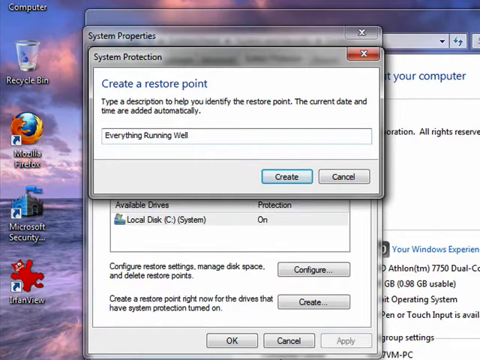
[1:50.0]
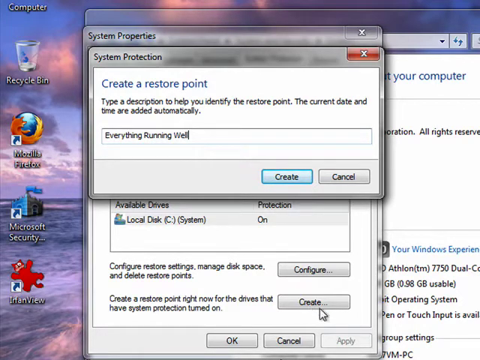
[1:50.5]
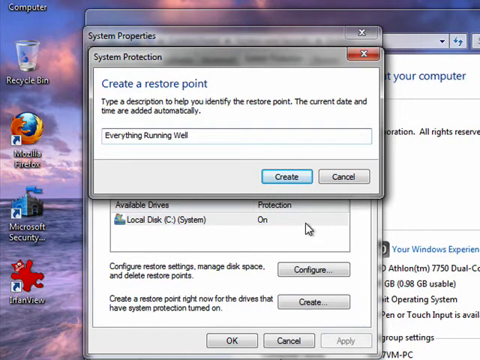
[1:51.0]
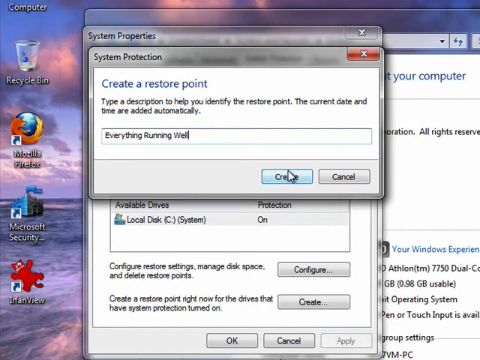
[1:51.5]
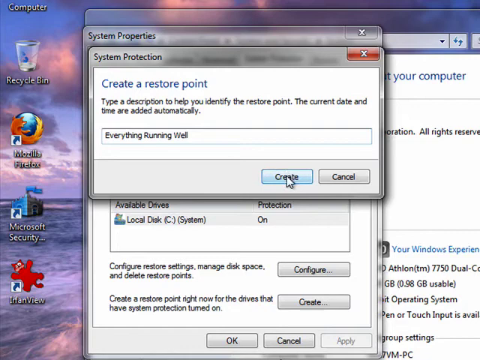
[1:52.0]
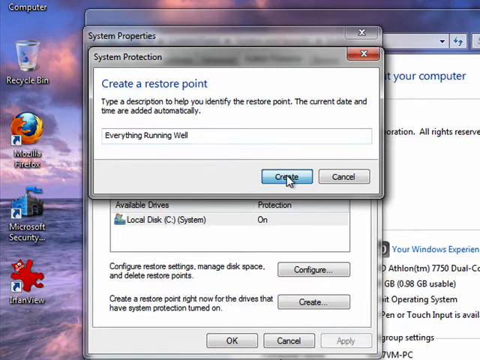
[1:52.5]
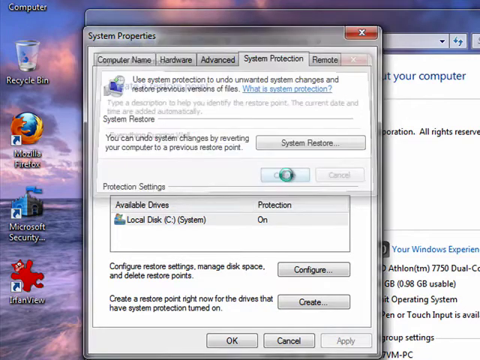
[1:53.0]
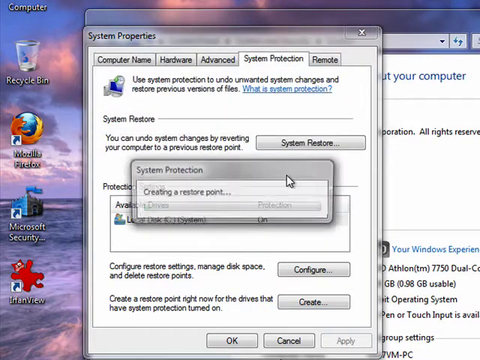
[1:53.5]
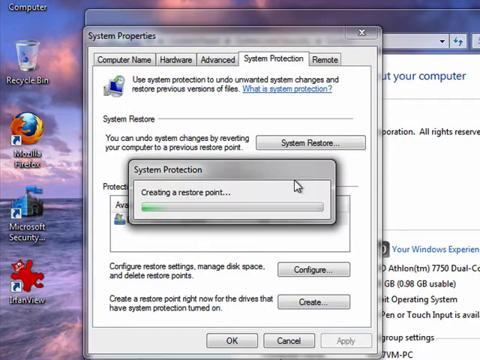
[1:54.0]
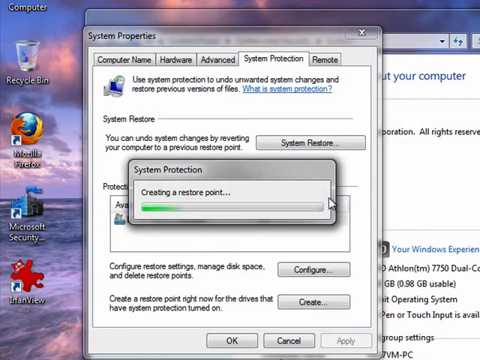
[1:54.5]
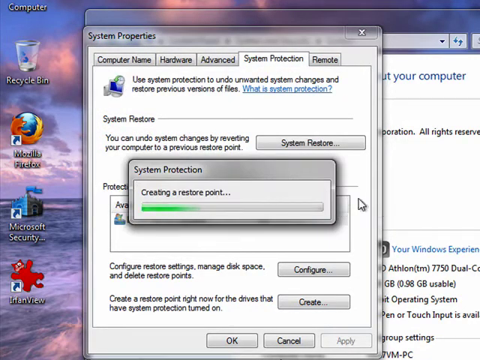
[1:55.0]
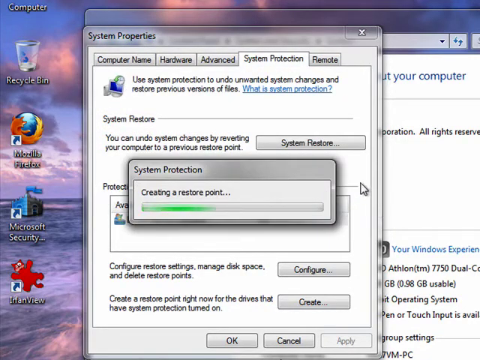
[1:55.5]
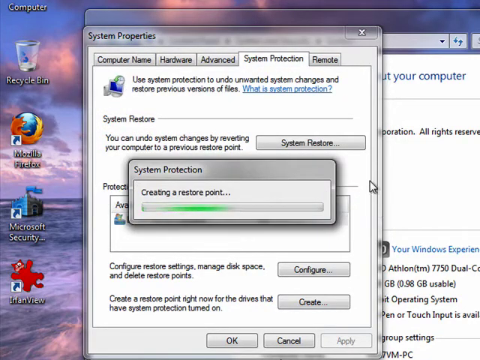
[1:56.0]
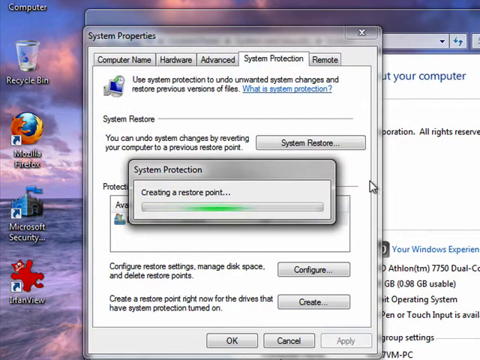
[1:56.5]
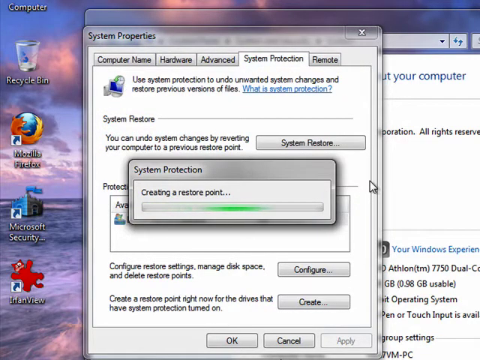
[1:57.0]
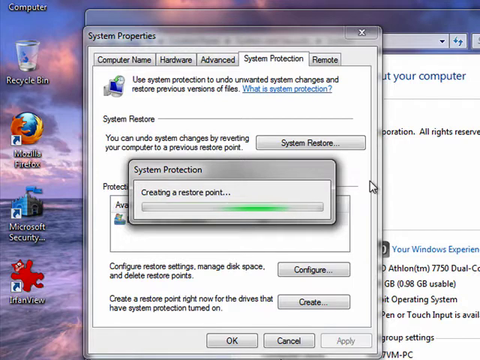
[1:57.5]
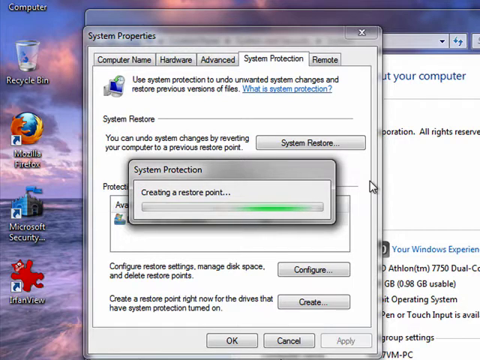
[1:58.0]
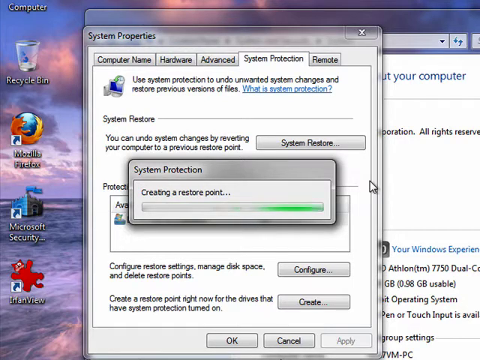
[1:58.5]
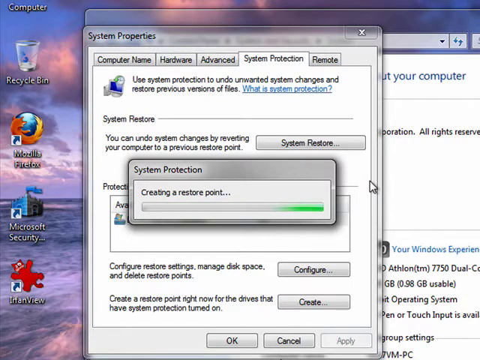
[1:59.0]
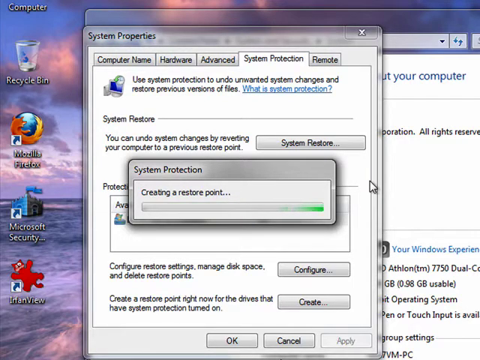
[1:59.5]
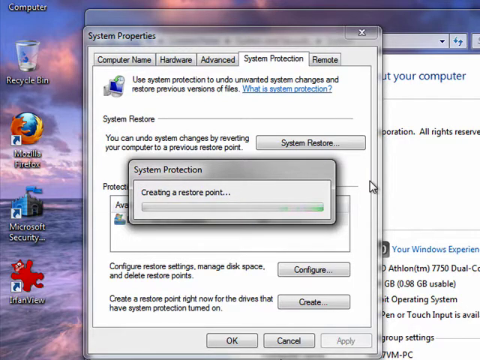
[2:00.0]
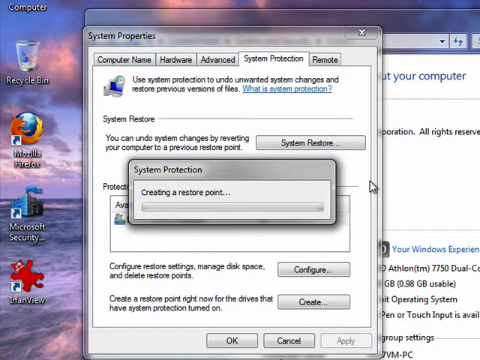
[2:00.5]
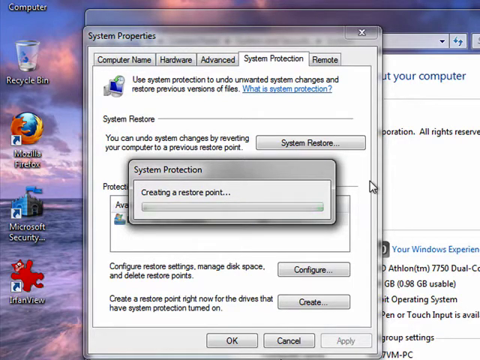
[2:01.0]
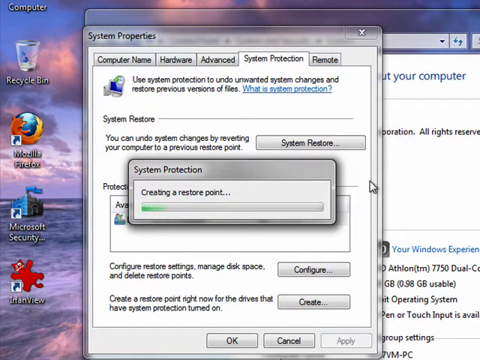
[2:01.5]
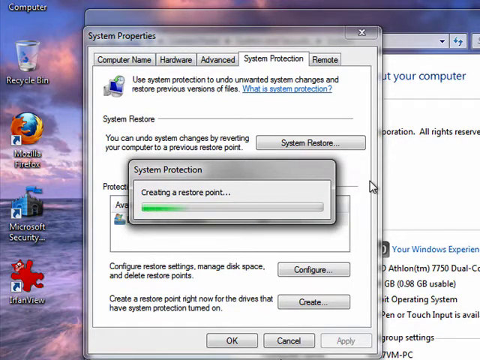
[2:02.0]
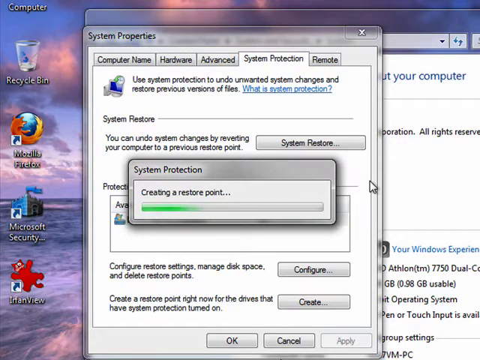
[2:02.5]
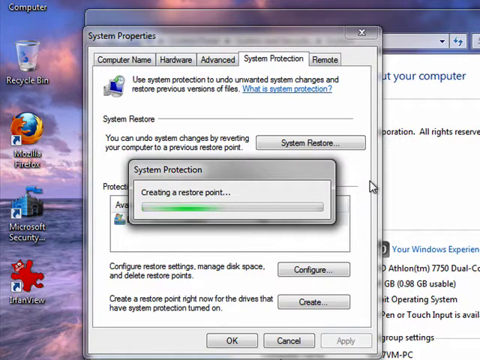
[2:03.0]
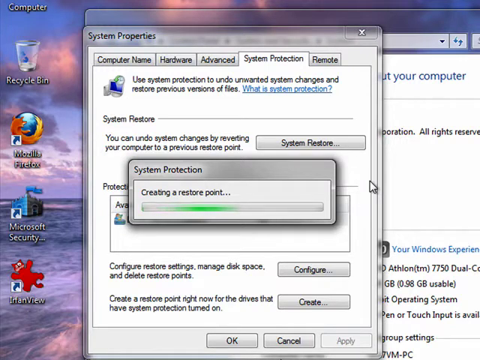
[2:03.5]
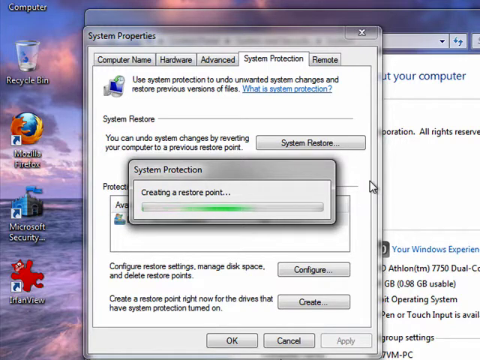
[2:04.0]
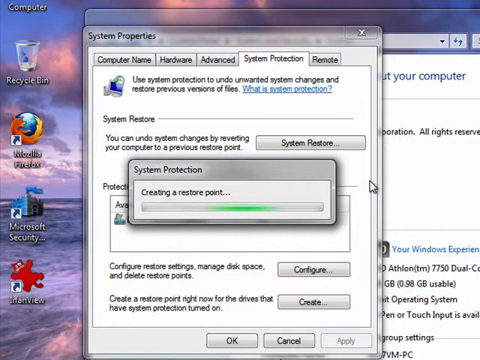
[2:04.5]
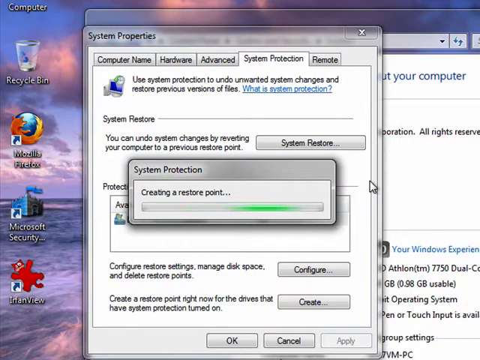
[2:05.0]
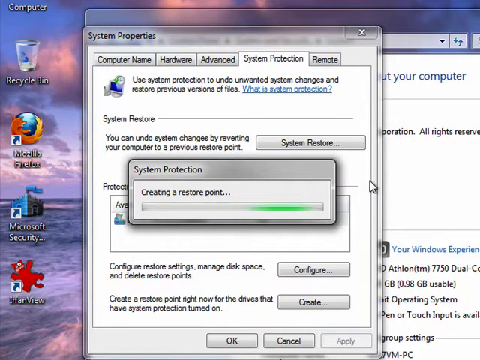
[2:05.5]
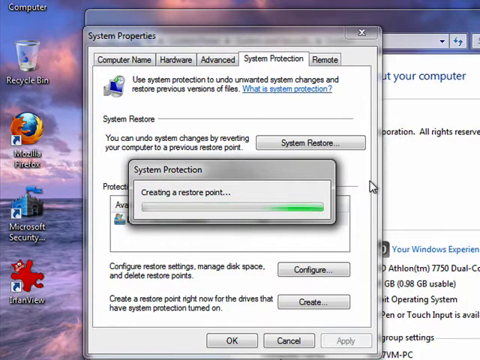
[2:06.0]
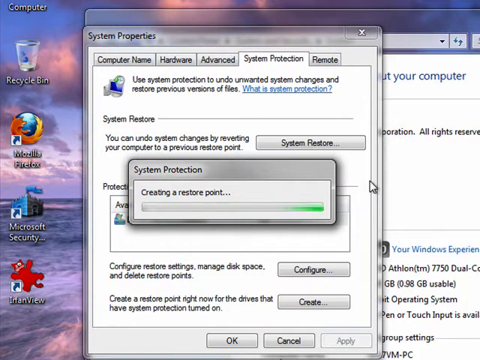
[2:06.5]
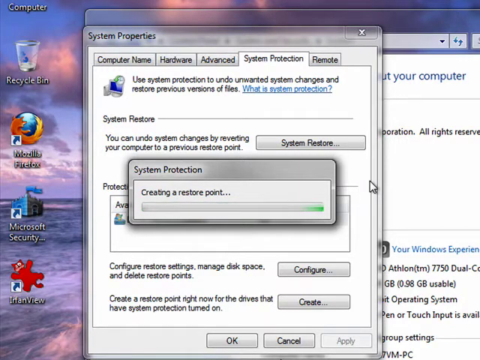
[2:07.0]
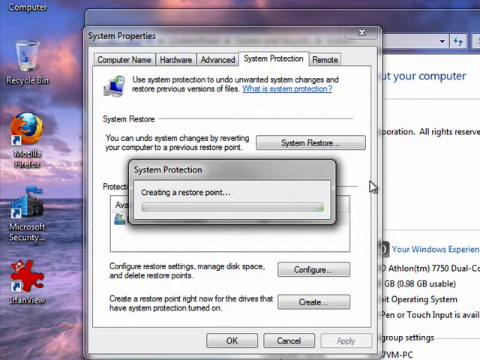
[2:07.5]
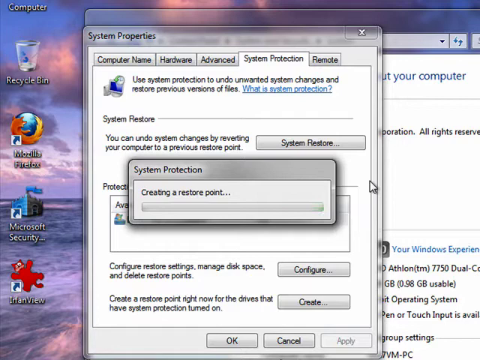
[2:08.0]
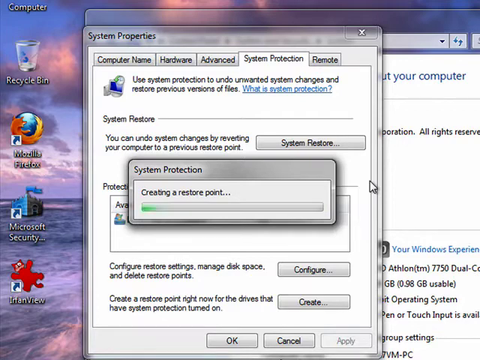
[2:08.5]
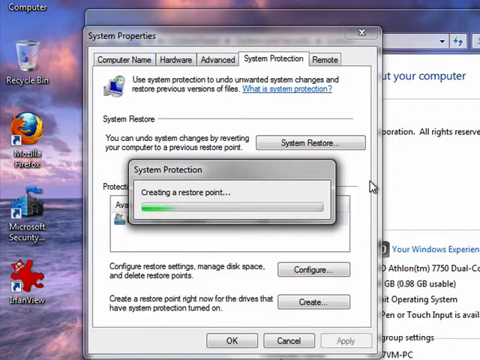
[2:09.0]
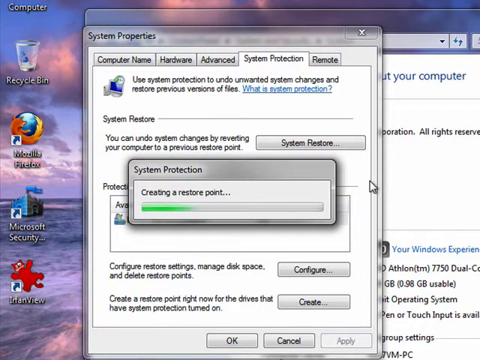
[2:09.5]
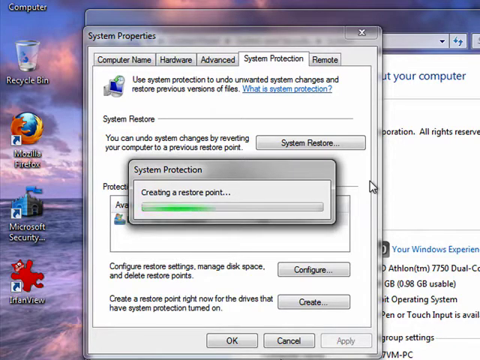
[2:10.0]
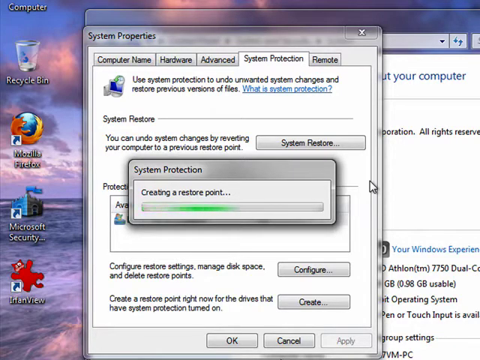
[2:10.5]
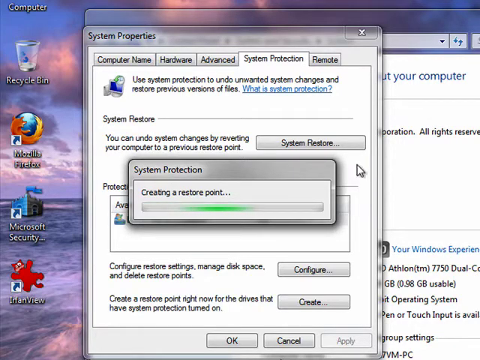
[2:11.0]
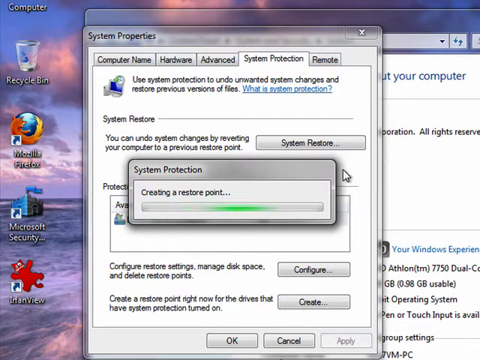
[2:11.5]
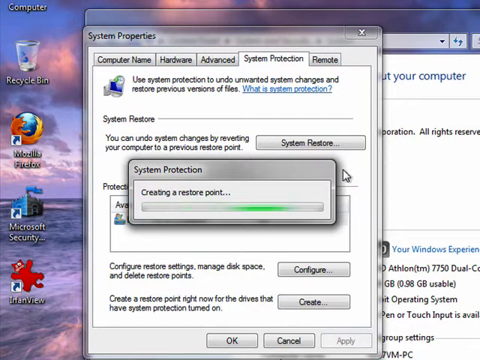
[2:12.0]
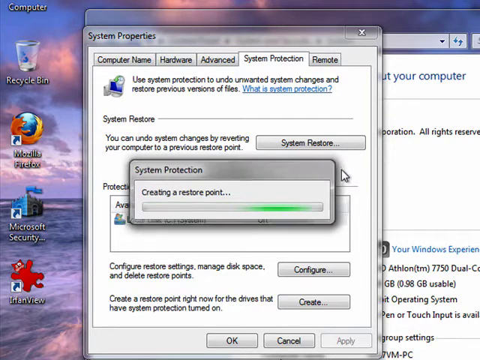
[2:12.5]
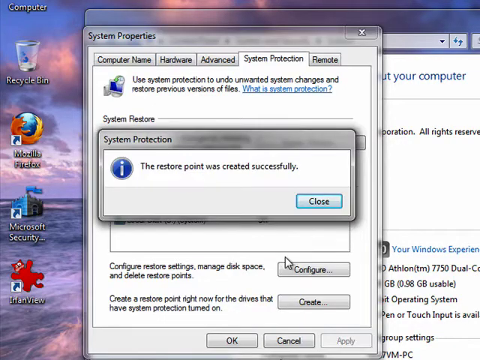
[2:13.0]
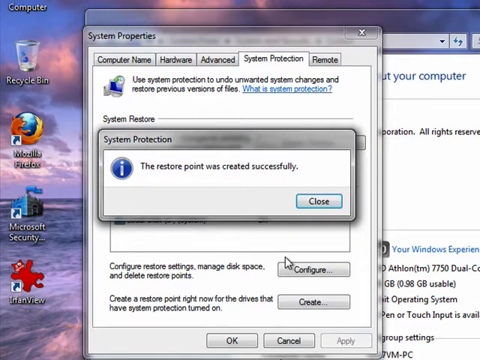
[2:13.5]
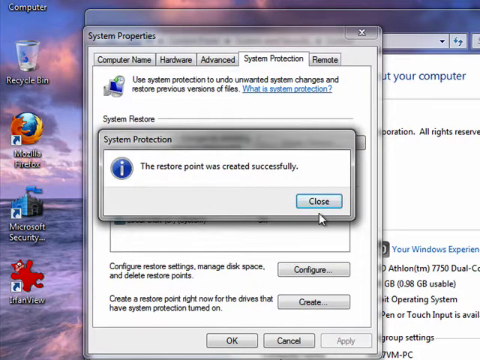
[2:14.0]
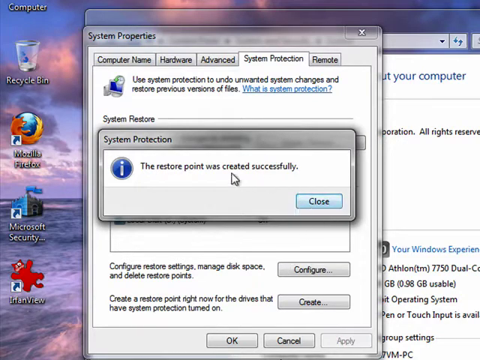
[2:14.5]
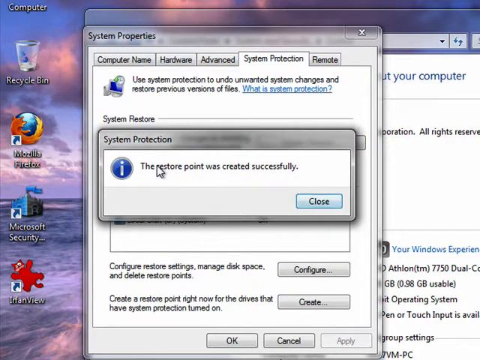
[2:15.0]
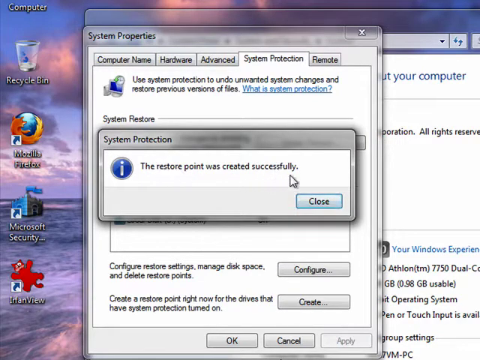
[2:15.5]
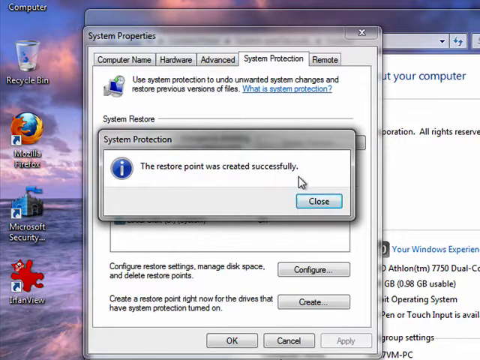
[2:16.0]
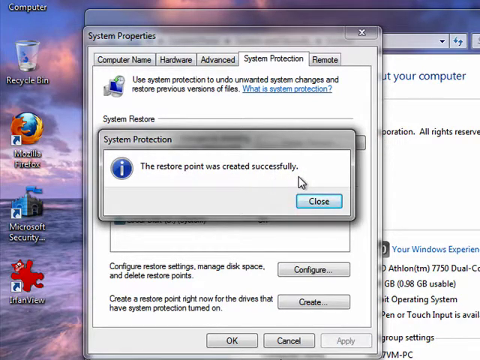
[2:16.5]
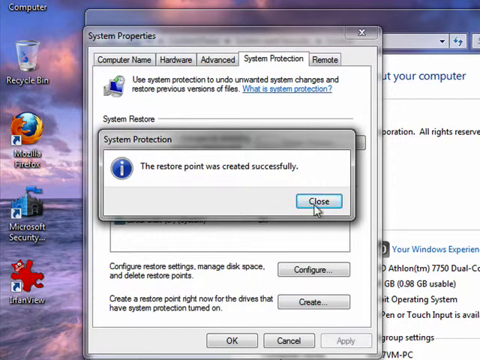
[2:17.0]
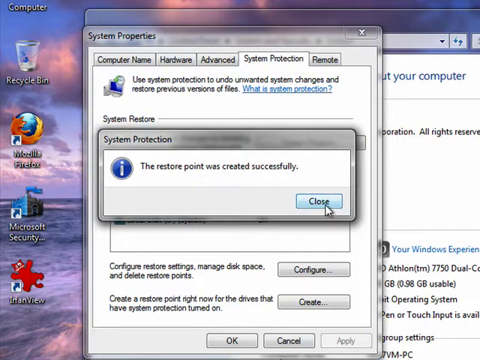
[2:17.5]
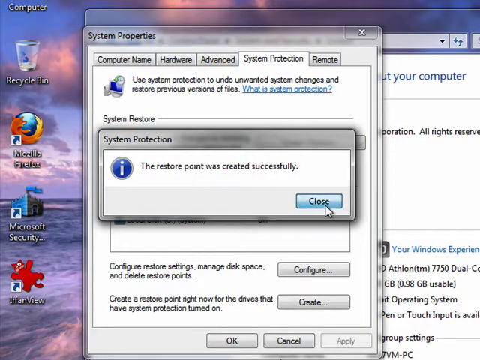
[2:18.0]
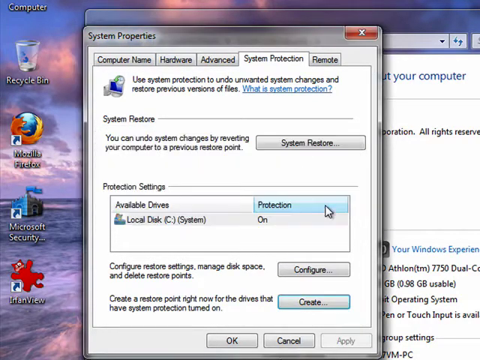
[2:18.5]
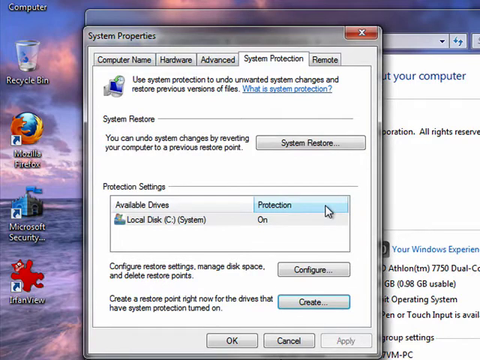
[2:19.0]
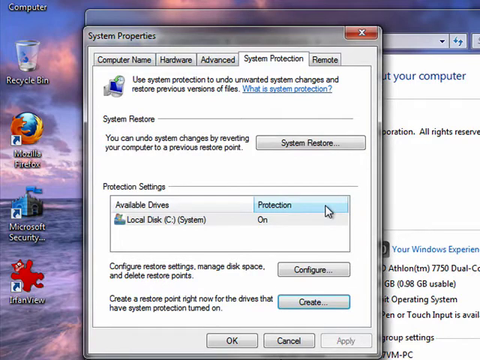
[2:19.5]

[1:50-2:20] Under a tab that says "system protection," the person clicks the option to create a restore point, and a loading bar starts. Then text says "this restore point was created successfully," and the person hovers the mouse over this sentence, moving it back and forth. The text "everything running well" is shown as the description to help identify the restore point.